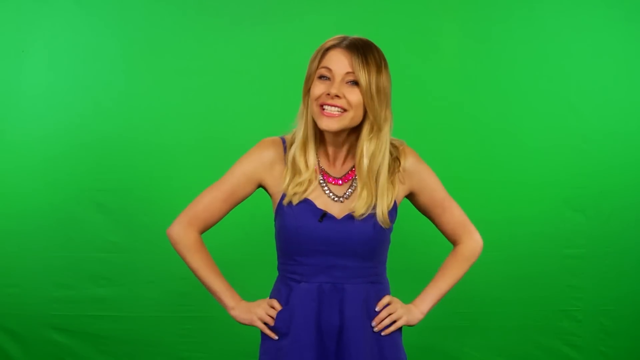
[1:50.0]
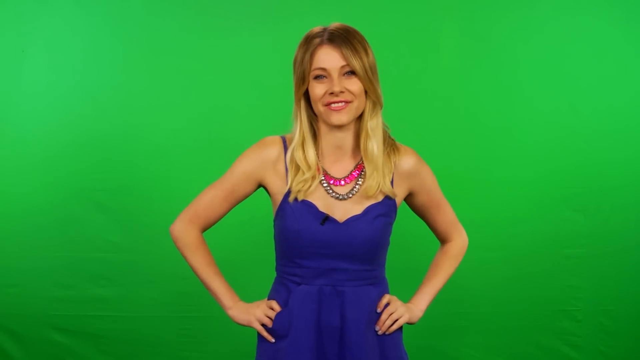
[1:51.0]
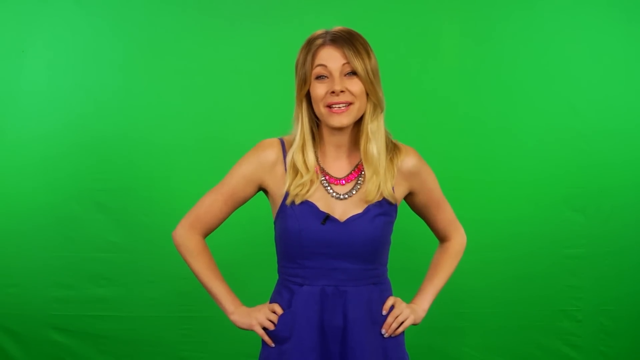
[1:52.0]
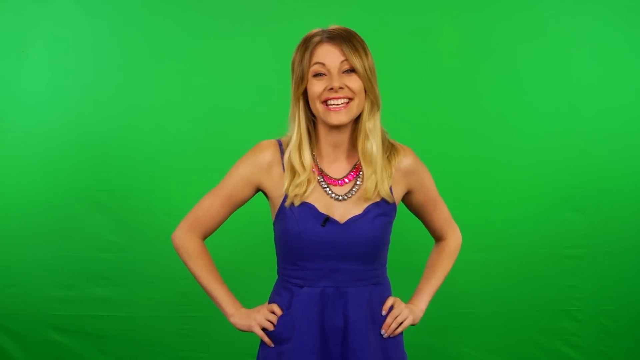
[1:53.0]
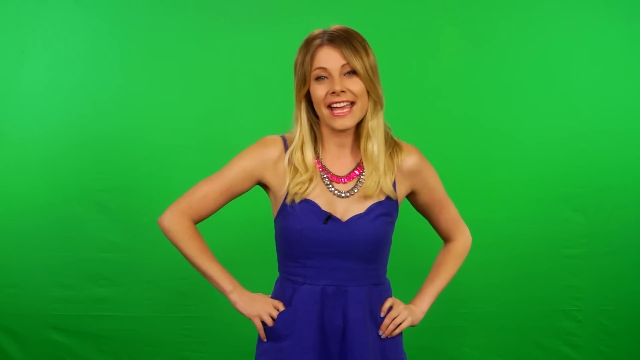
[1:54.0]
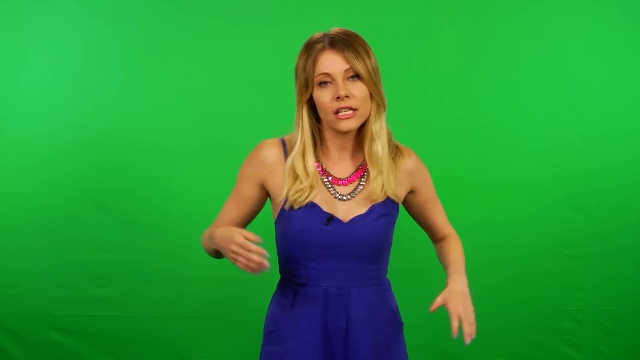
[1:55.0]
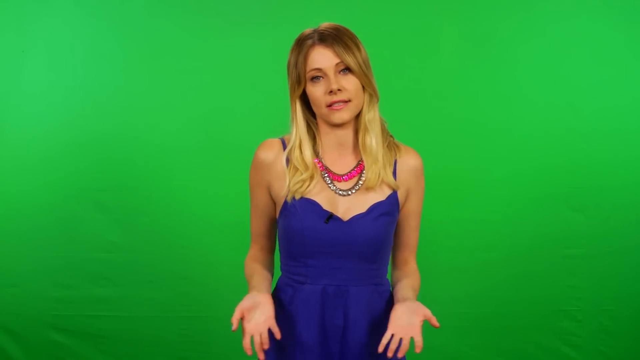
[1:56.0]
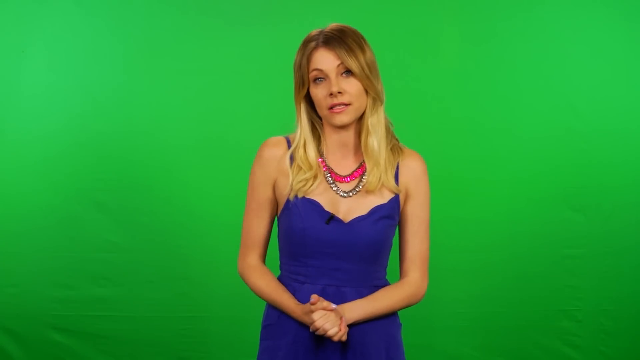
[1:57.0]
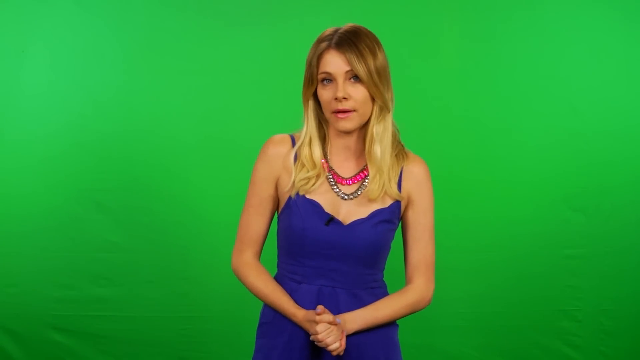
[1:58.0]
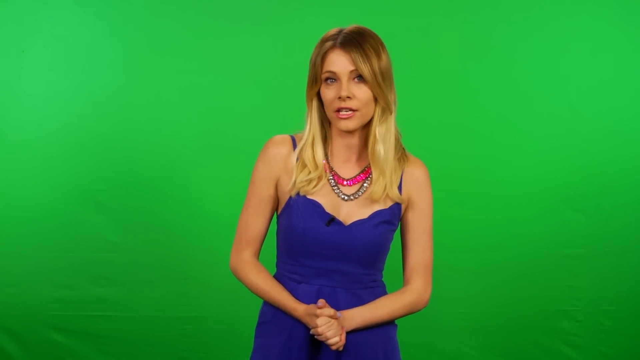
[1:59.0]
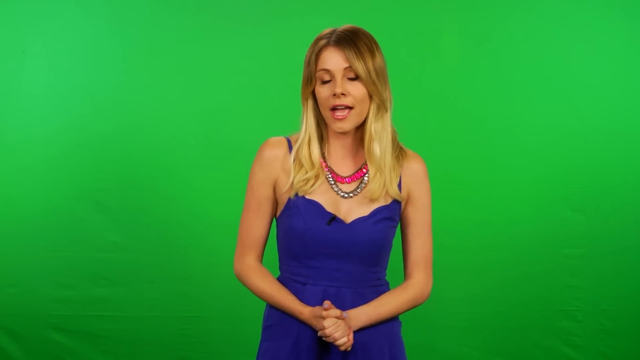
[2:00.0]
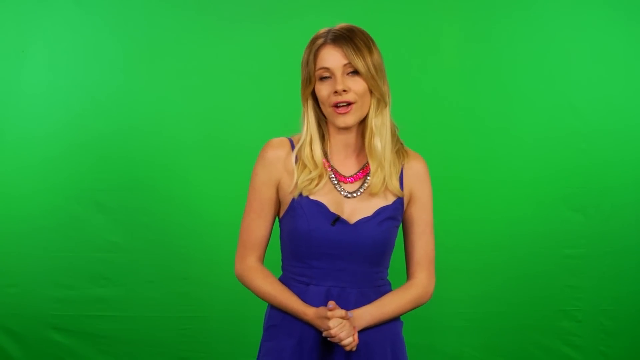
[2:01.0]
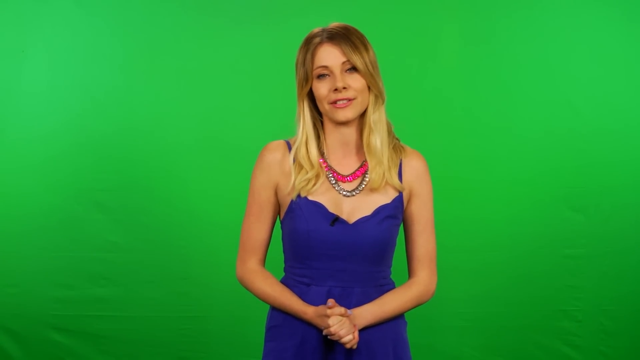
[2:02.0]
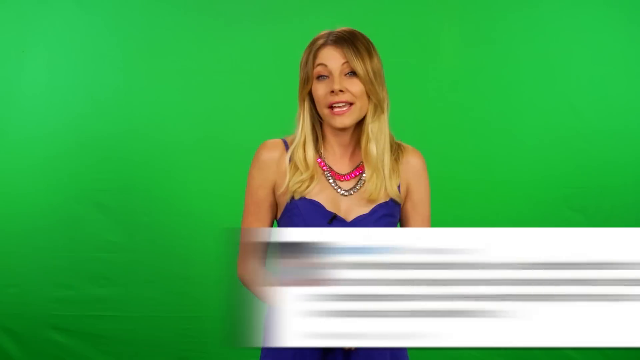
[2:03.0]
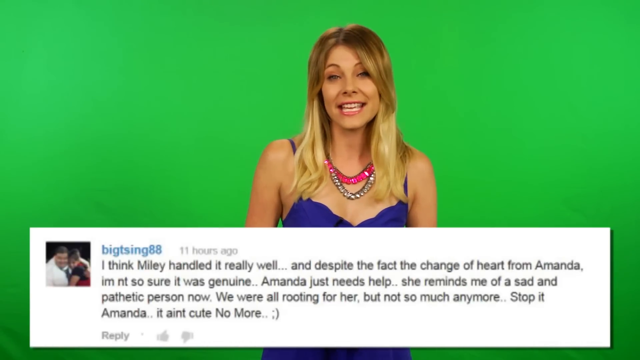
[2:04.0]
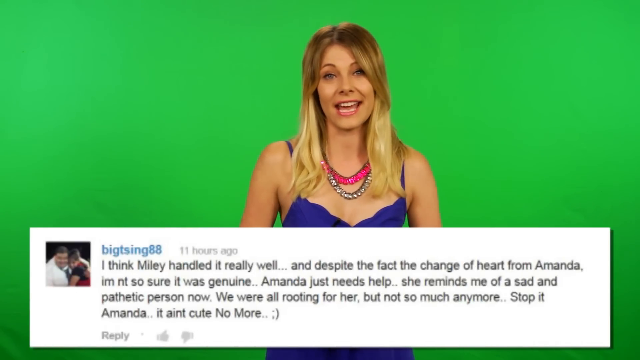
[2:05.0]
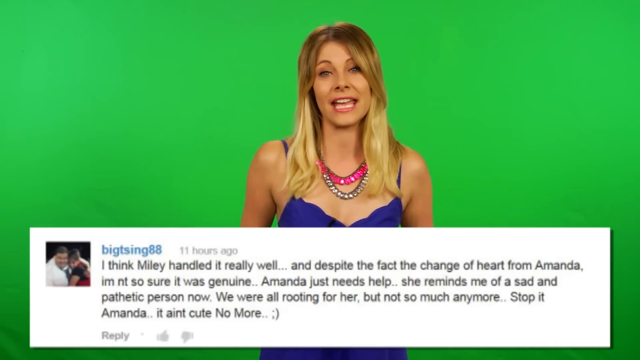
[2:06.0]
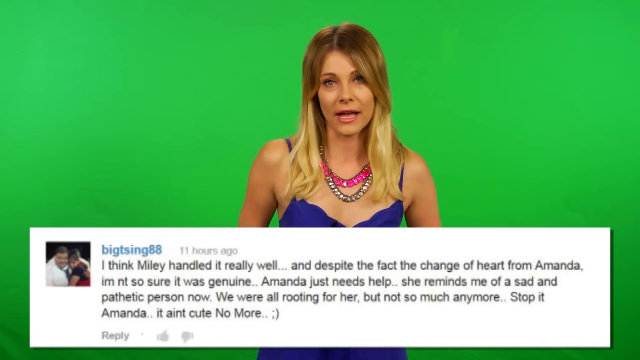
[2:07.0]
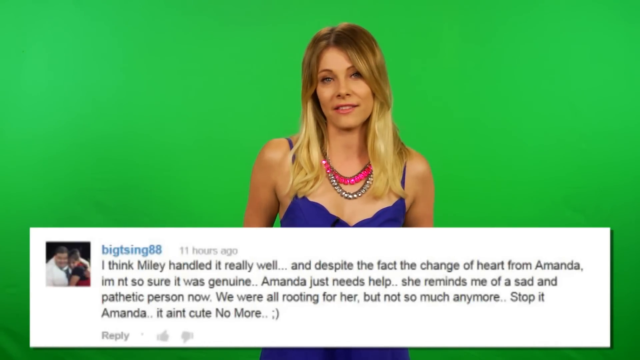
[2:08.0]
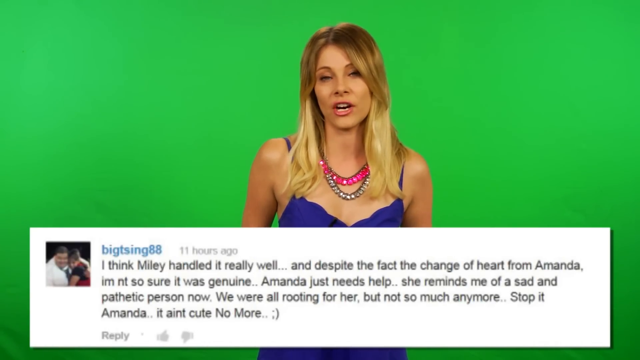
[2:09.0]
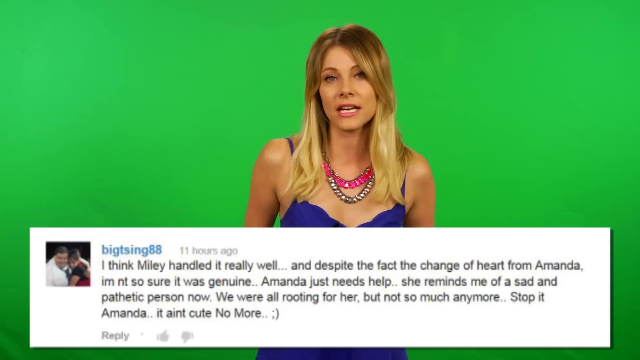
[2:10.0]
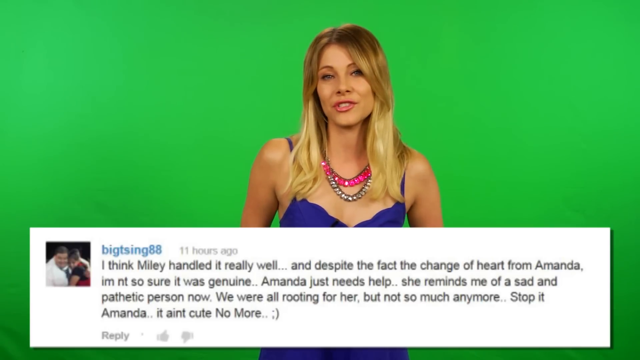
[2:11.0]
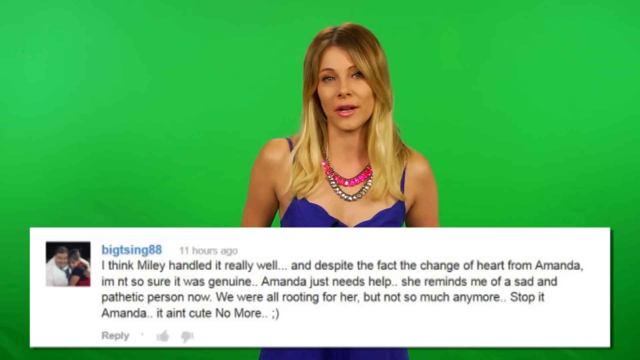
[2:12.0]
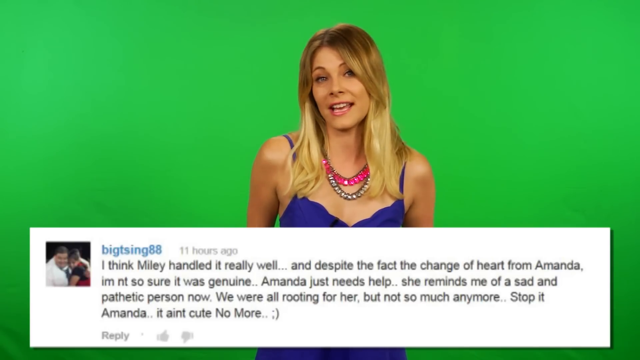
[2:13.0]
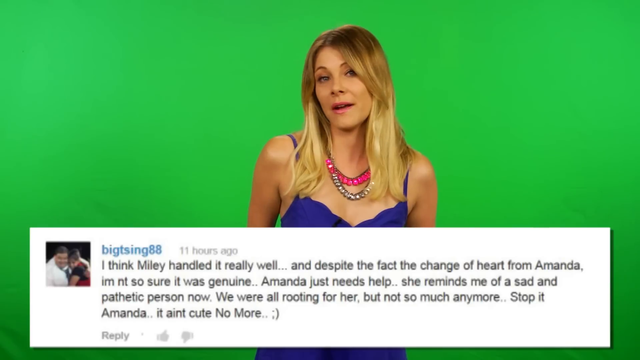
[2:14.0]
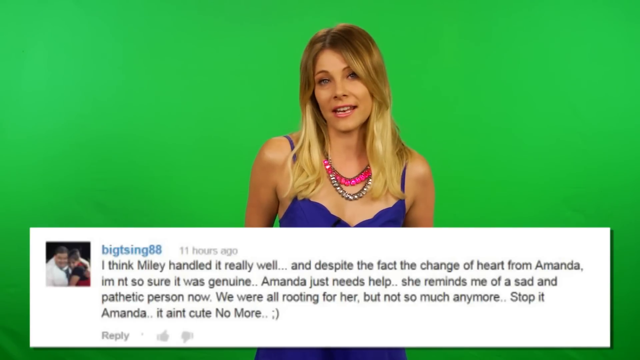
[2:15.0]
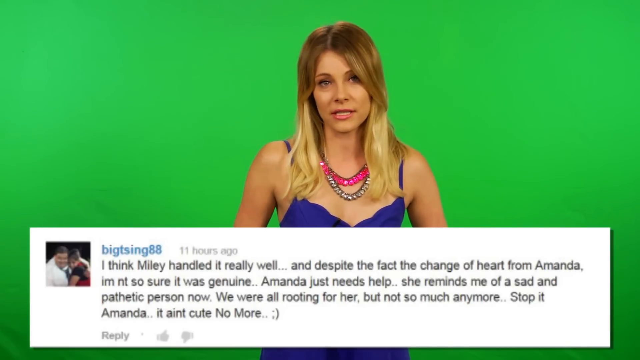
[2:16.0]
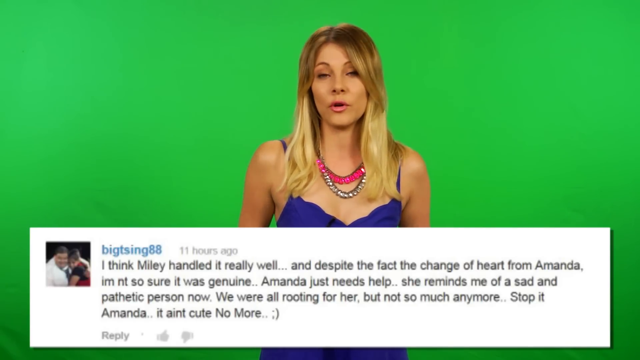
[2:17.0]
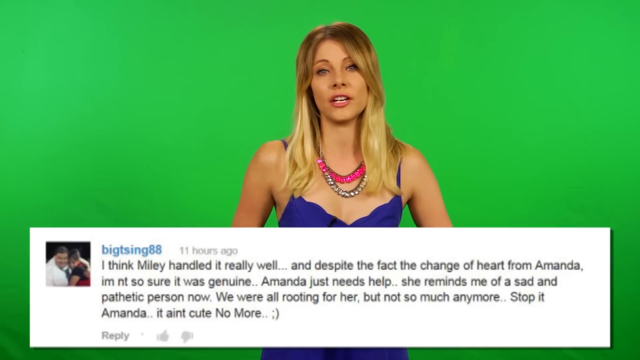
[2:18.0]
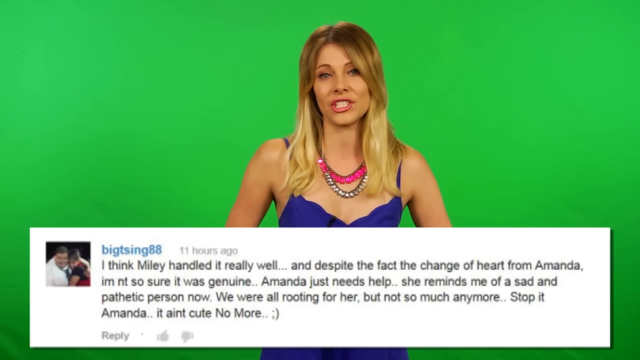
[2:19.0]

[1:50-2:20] A very skinny blonde-haired lady is on screen, smiling a lot, with a big green background behind her and her hands together. A tweet appears: "Amanda, I'm not so sure it was genuine. Amanda just needs help. She reminds me of a sad and pathetic person now. We were all rooting for her, but not so much anymore. Stop it, Amanda. It ain't cute no more." It is by Big T Singh 88. The blonde-haired lady continues to talk.